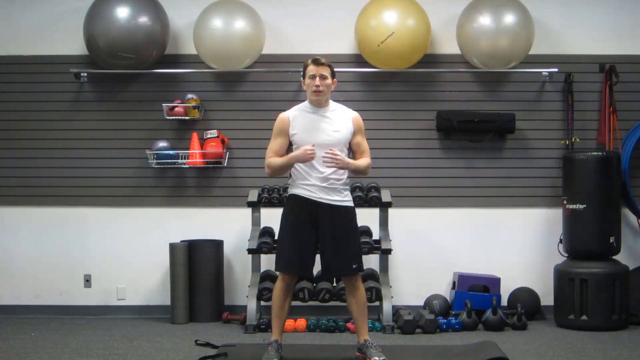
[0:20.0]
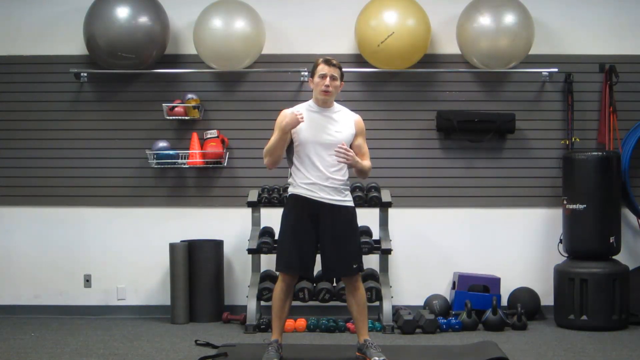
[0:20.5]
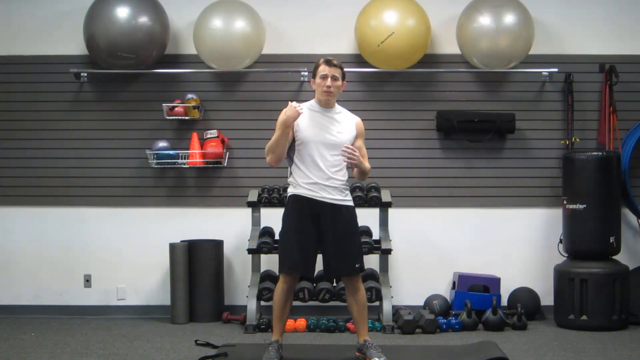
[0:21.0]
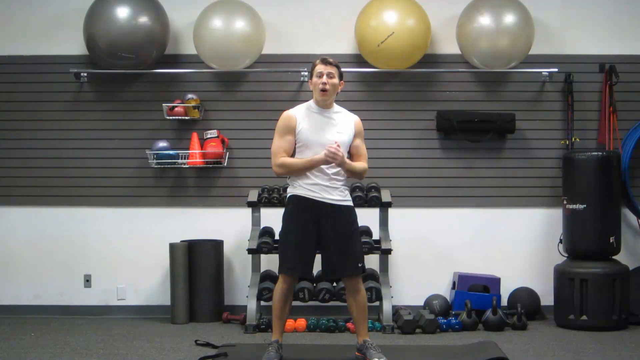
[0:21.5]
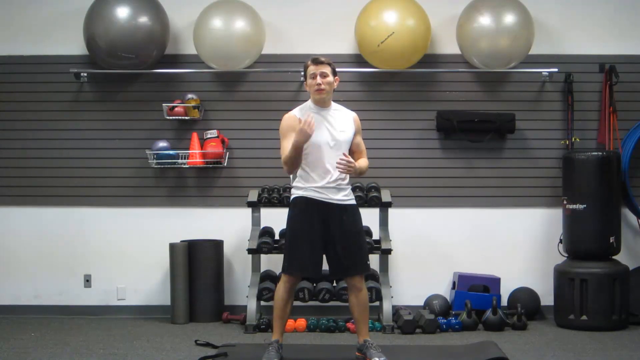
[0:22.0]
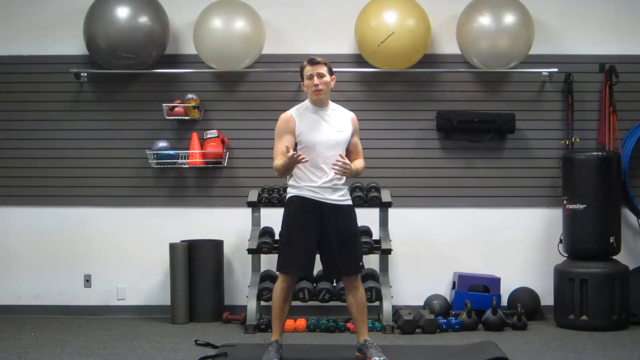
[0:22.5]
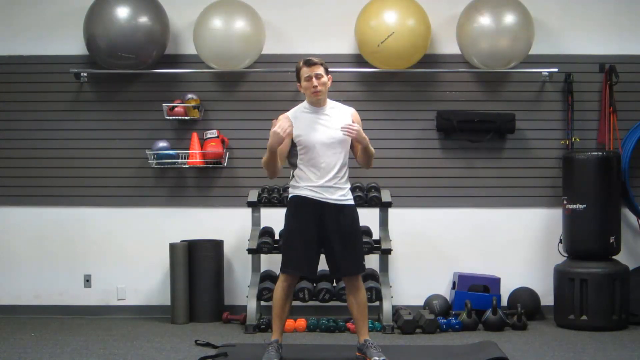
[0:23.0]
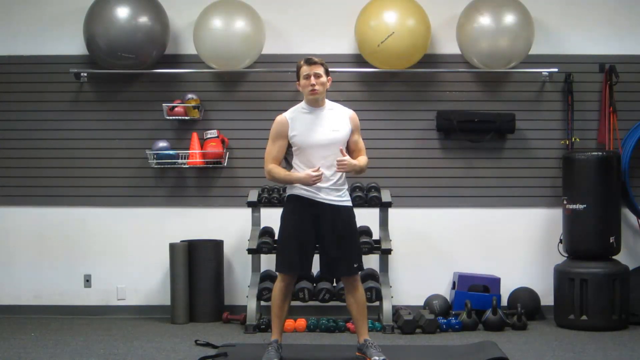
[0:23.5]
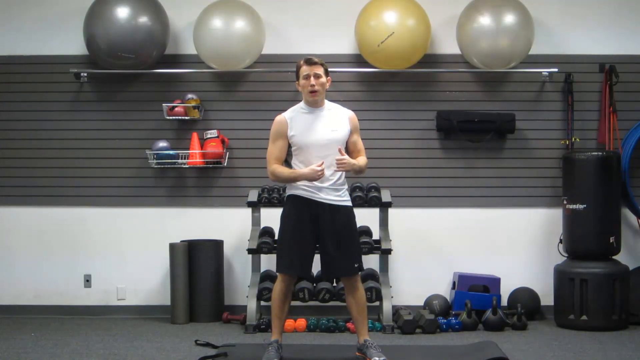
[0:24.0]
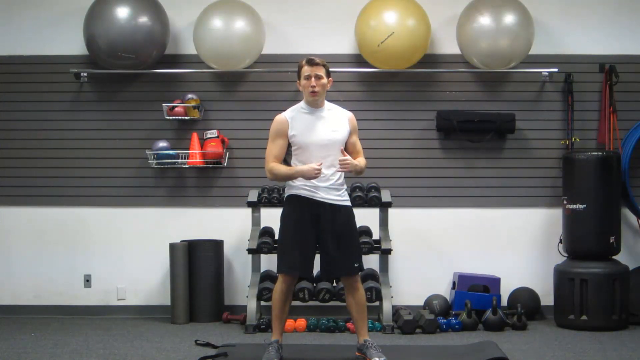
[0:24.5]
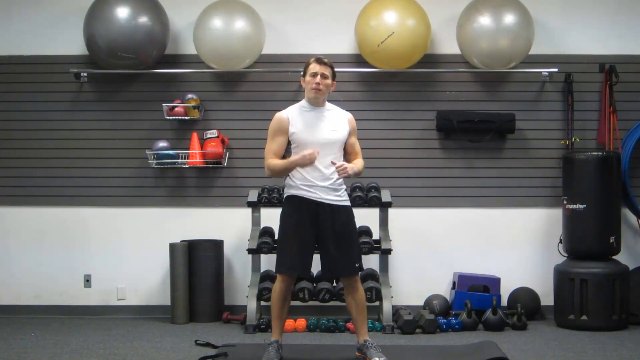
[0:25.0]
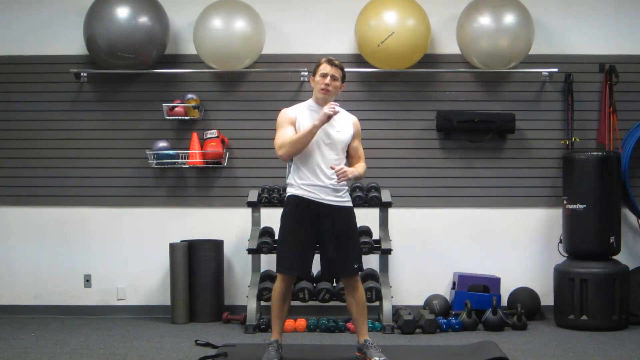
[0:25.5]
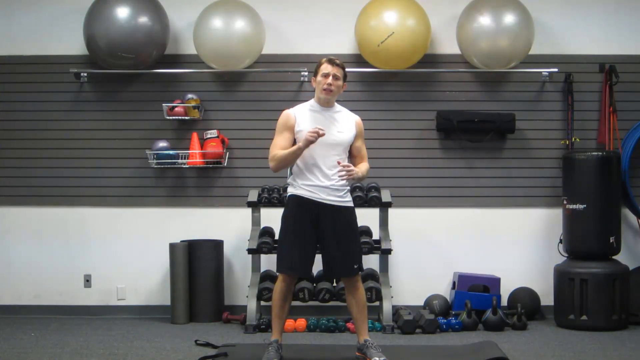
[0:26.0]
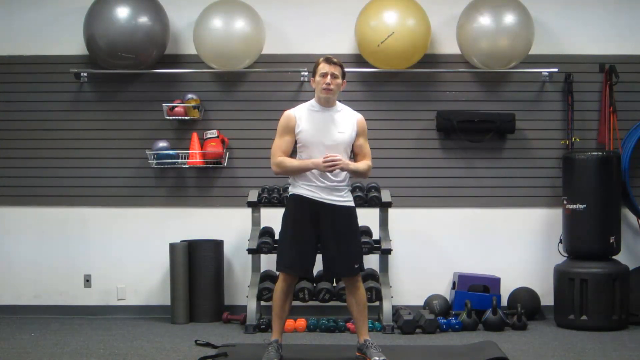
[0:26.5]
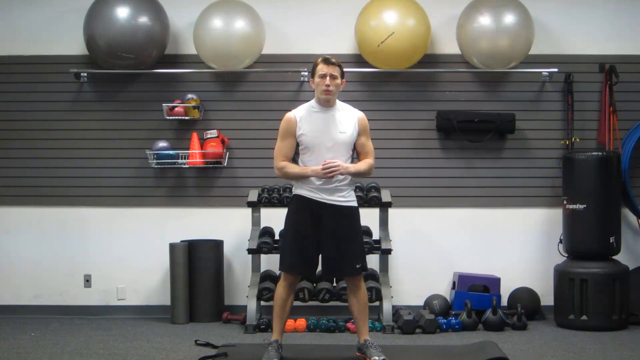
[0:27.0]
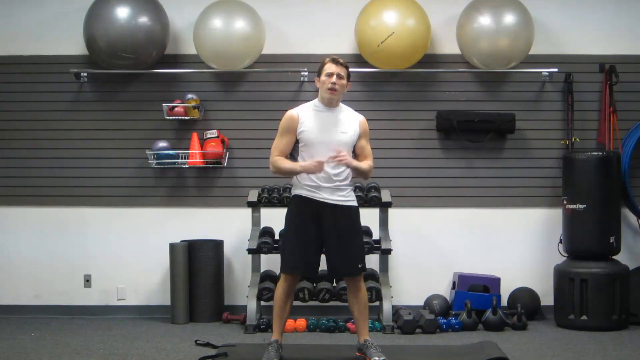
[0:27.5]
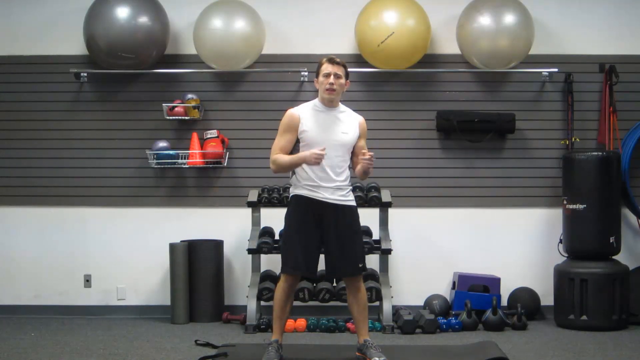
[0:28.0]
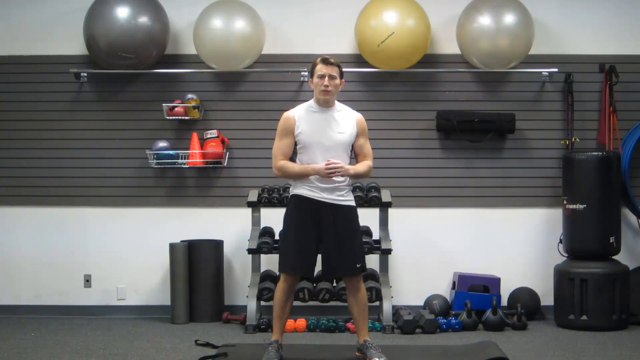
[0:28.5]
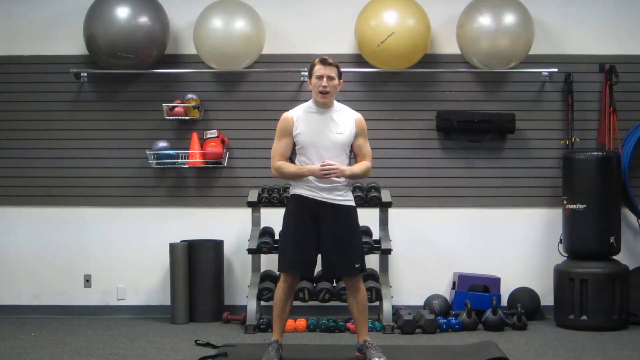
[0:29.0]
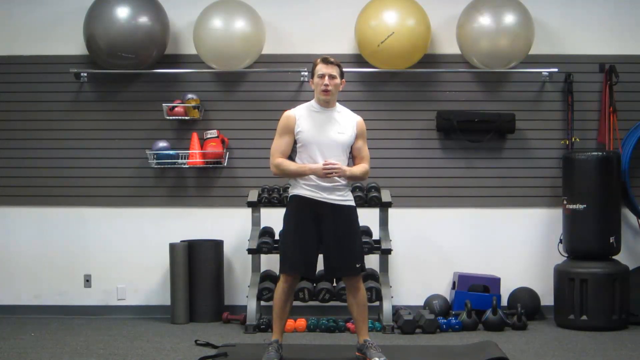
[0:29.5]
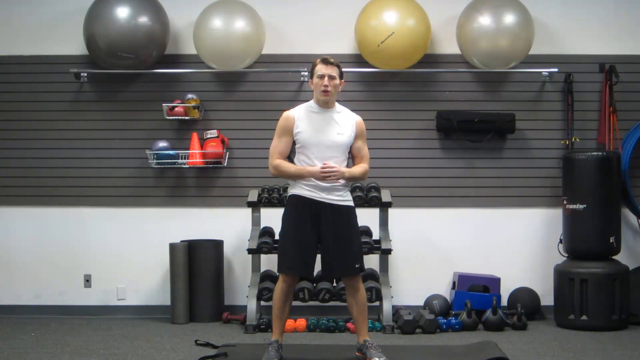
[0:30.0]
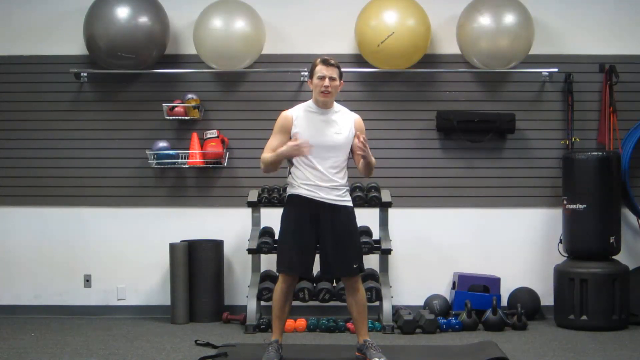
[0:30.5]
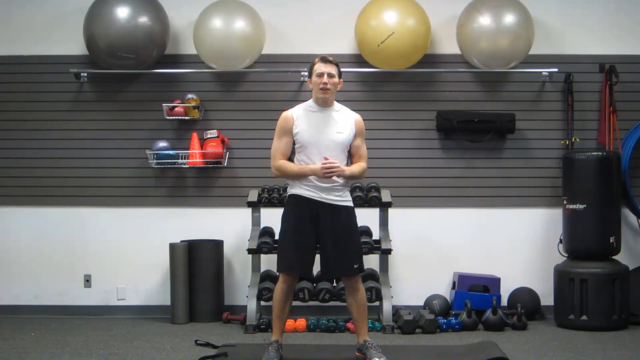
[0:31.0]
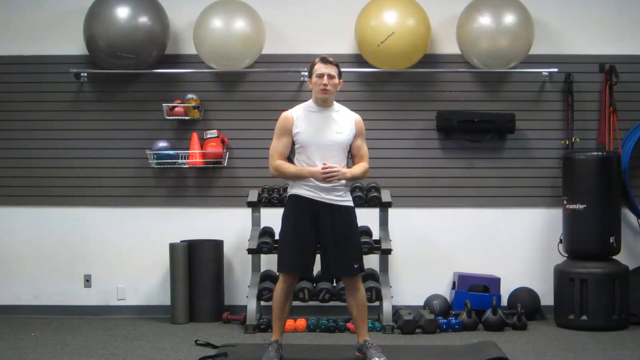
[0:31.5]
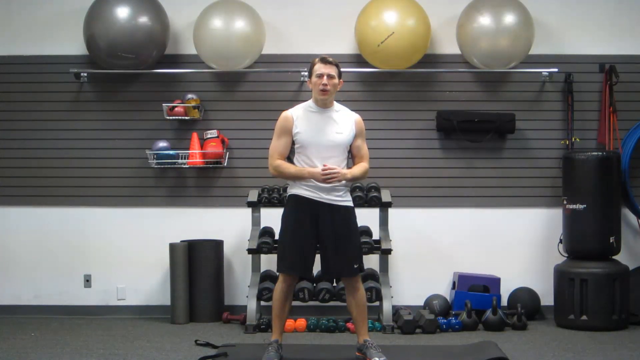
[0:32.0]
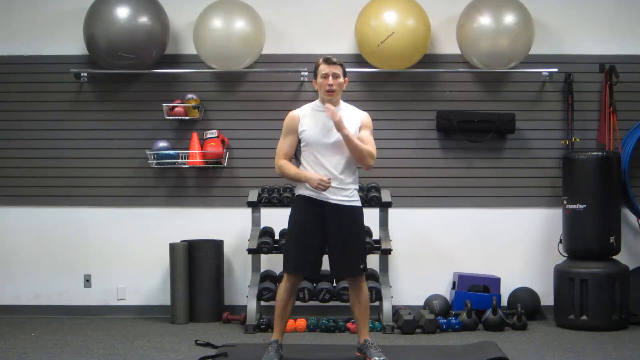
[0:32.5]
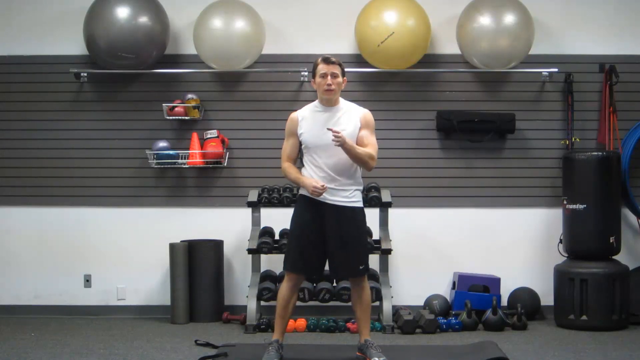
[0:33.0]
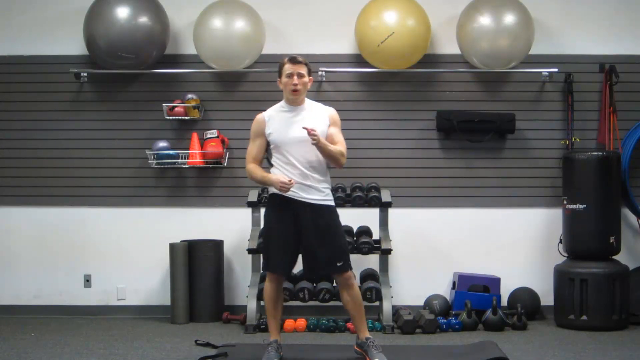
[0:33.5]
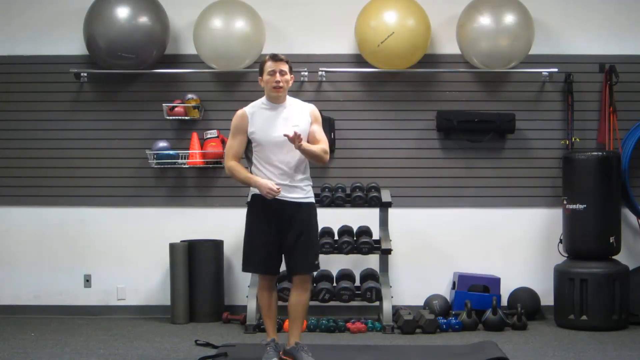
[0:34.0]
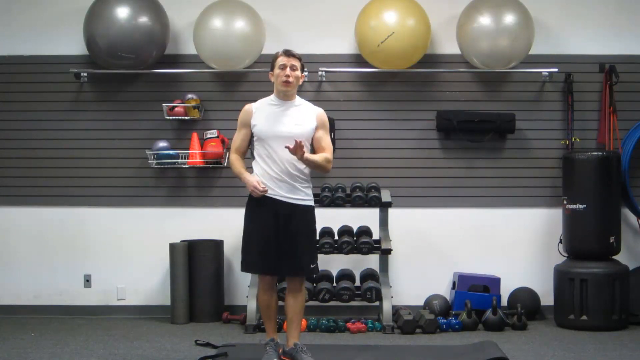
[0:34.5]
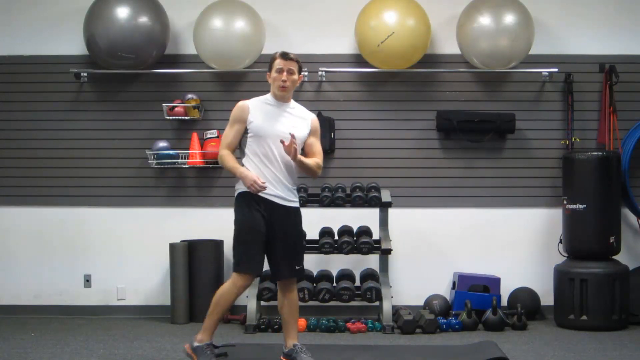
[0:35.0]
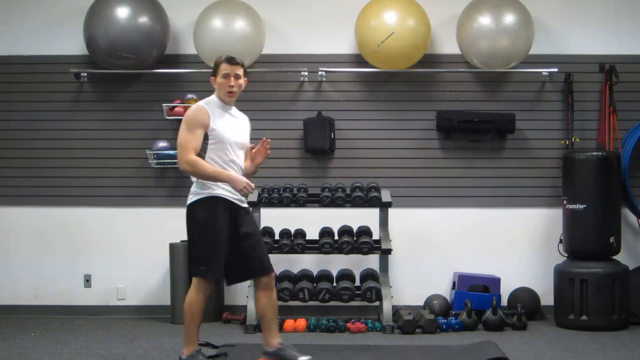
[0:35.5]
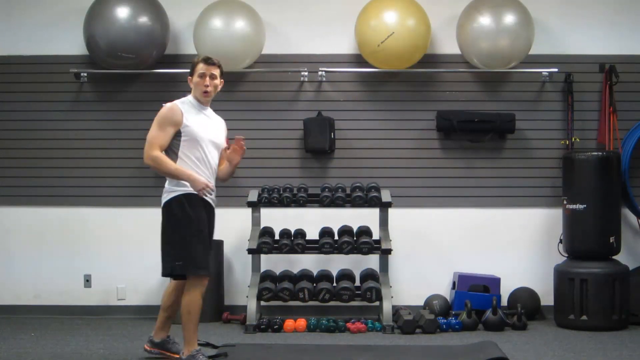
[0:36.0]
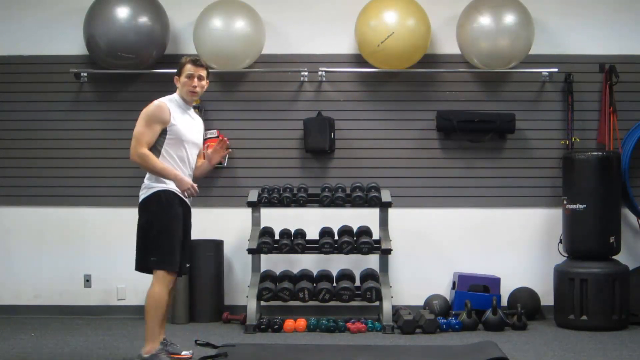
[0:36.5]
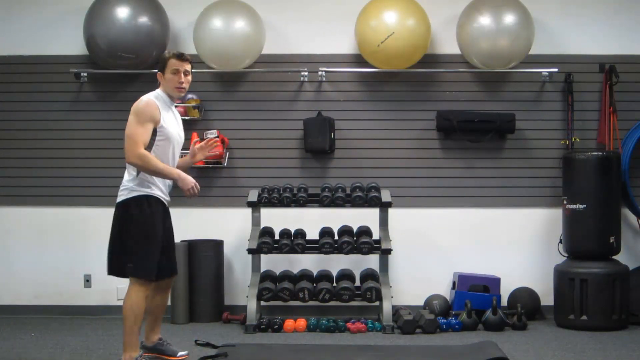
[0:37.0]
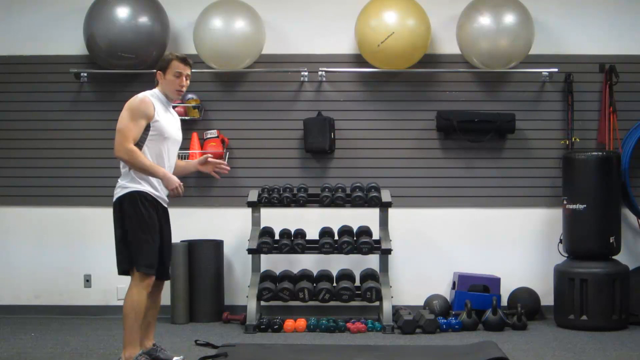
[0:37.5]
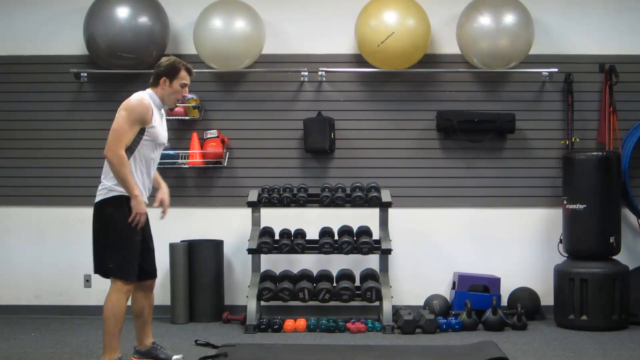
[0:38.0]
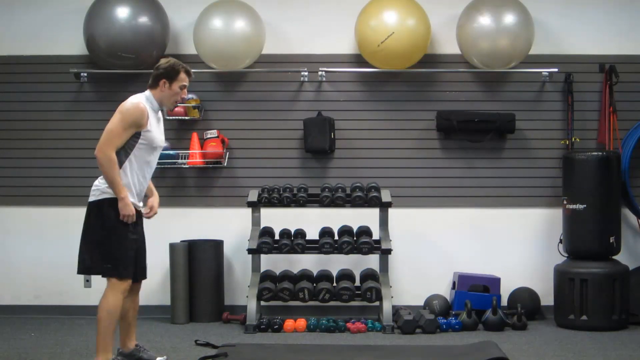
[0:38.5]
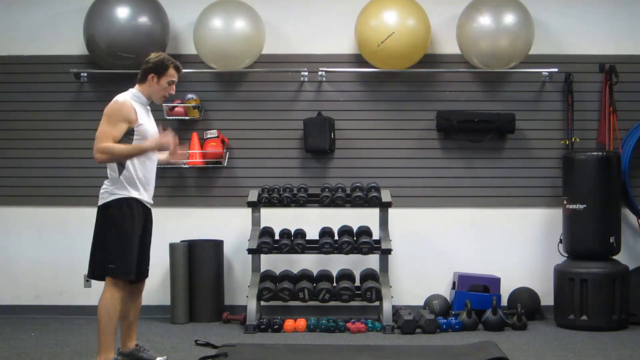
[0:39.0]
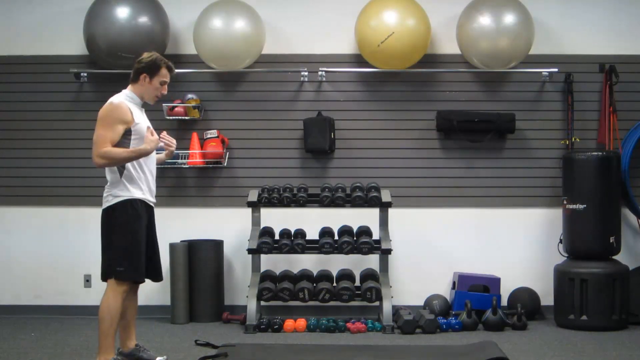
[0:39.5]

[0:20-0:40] A very fit man, apparently Caucasian, with his hair slicked back, is in a gym with his hands at his sides. The wall behind him seems to be full of gym equipment, such as four balls for stretching on; dumbbells are on a dumbbell rack right behind him, and there are rolled-up mats, a punching bag and some rope. He seems to be talking to the camera, pointing his hands to the left and to the right, apparently about working out. He seems to be middle-aged or young and wears a white shirt and black pants. He then moves to the side of the screen and shows the gym equipment while turning his body to the side, so his right side is visible, and he seems to be preparing to perform some sort of workout.